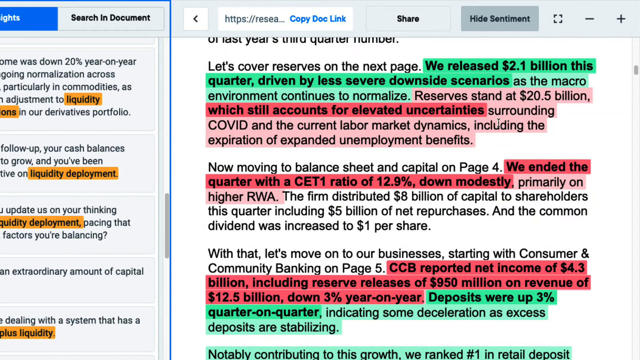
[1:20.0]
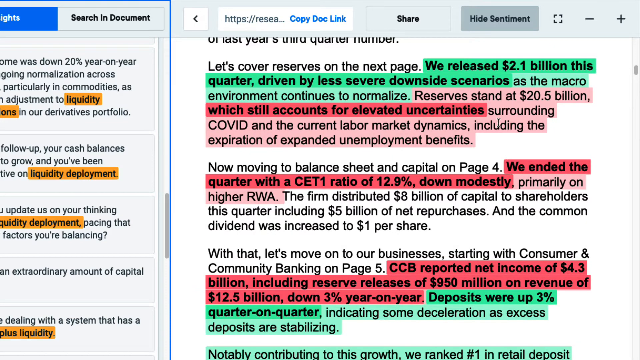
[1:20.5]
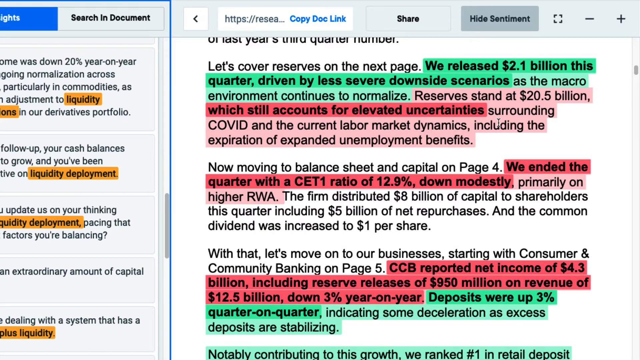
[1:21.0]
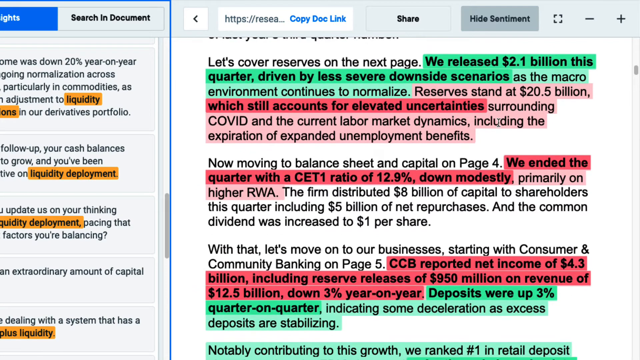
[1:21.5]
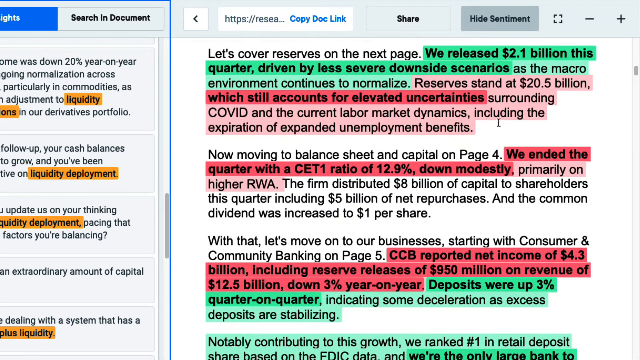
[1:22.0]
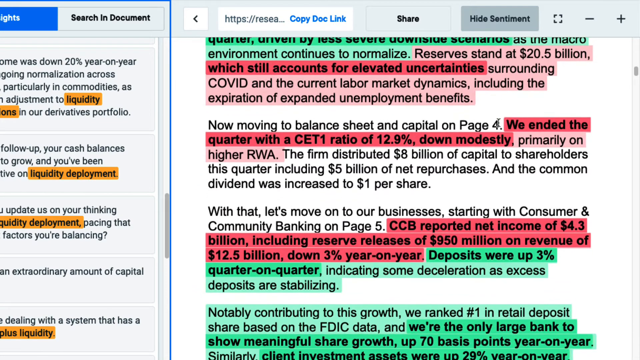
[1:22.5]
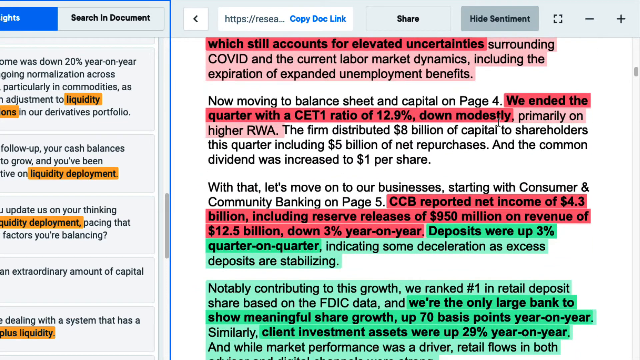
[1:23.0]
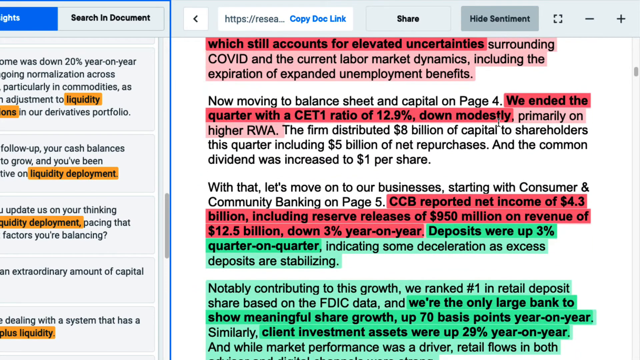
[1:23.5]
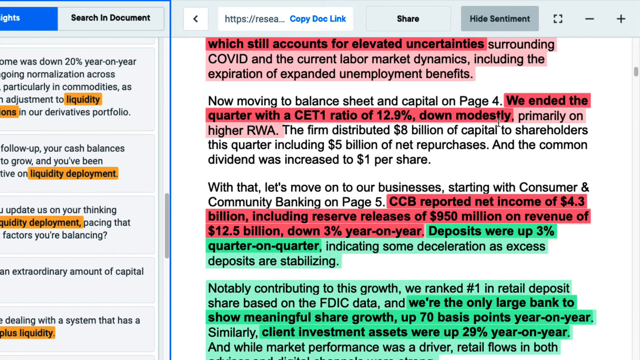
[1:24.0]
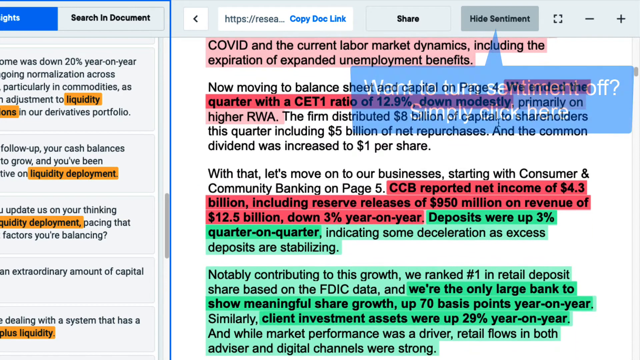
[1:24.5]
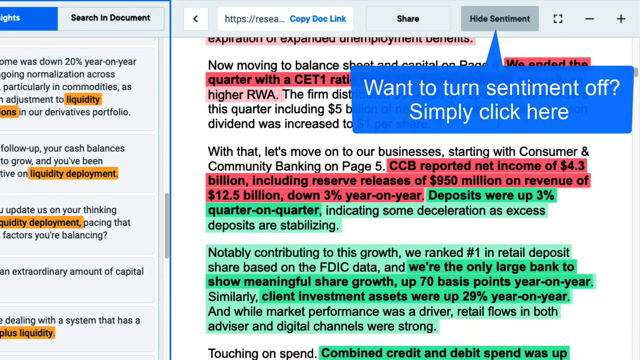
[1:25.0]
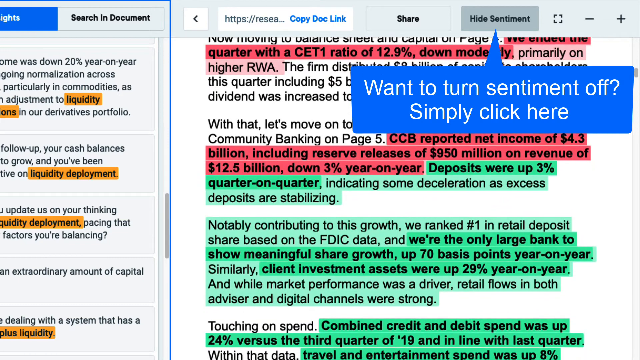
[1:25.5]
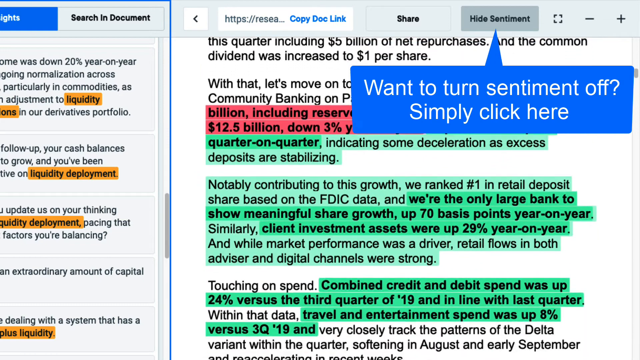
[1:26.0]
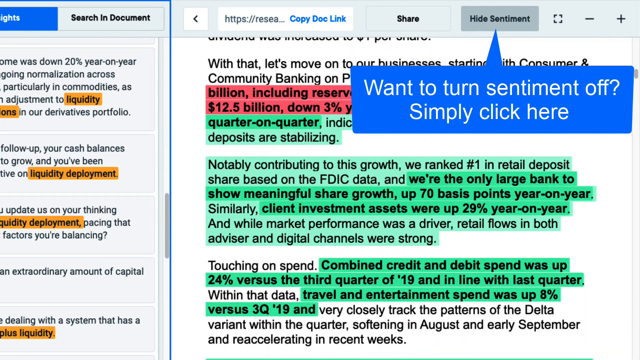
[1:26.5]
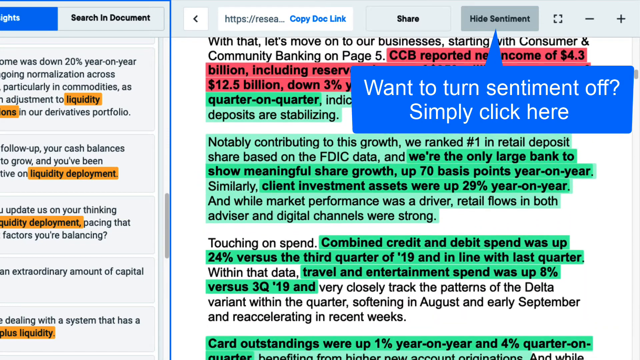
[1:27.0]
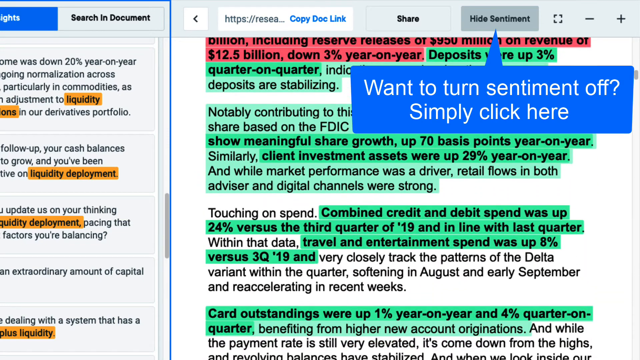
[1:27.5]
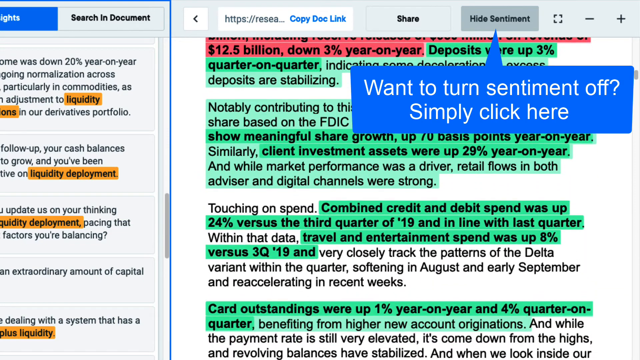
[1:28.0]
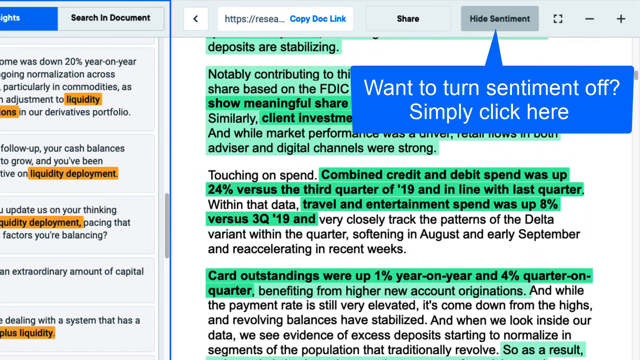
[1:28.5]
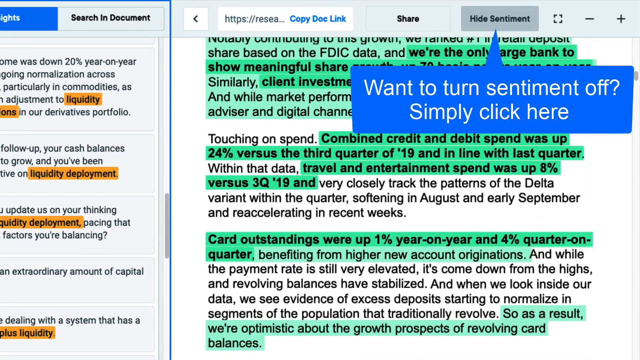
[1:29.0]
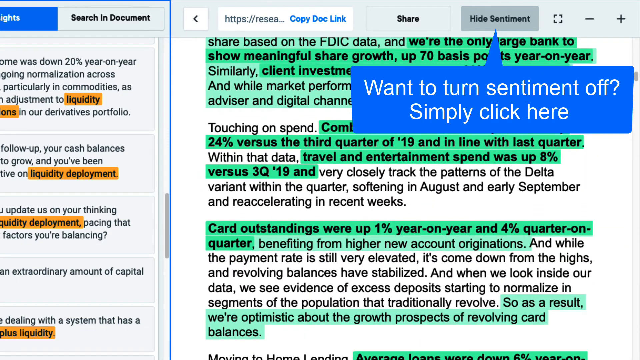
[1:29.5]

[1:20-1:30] The red-highlighted text reads "we ended the quarter with CETI ratio of 12.9% down modestly," and below it another red section reads "CCB reported net income of $4.3 billion, including reserve releases of $950 million on revenue of $12.5 billion, down 3% on year." In green, just to the right of and below that, it says "deposits were up 3%, quarter on quarter, indicating some deceleration as deposits are stabilizing," followed by "Notably contributed in this growth, we rank number one in retail deposit share based on FDIC data and we're the only large bank to show meaningful share growth at 70 basis points year on year" and "Client investments were up 29%." The page is scrolled down further, showing more information.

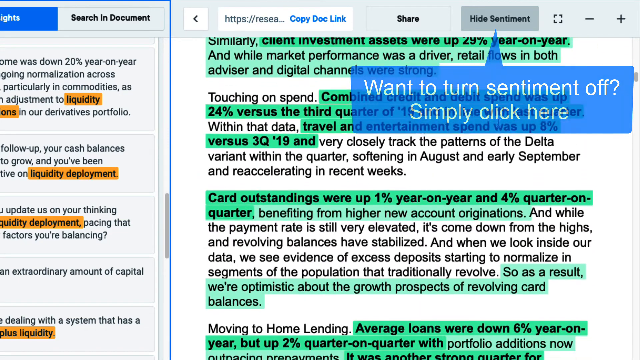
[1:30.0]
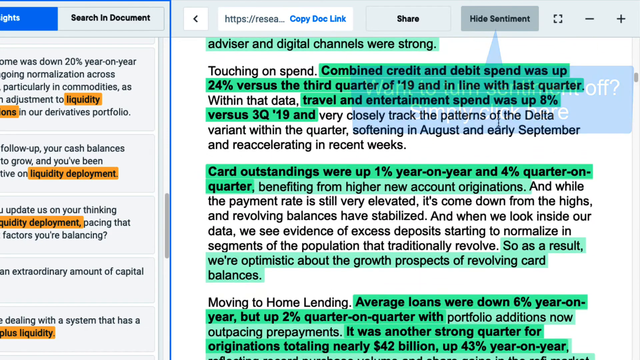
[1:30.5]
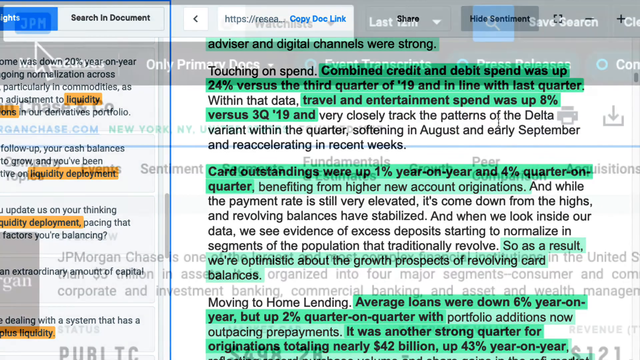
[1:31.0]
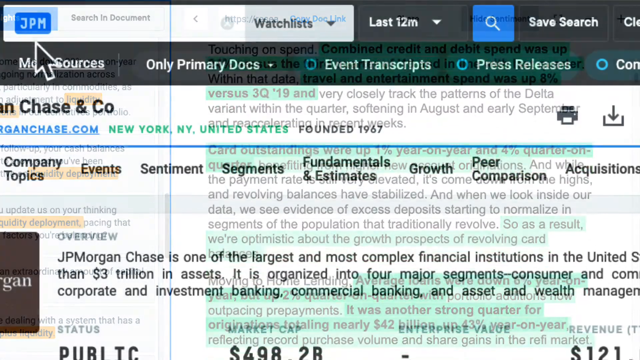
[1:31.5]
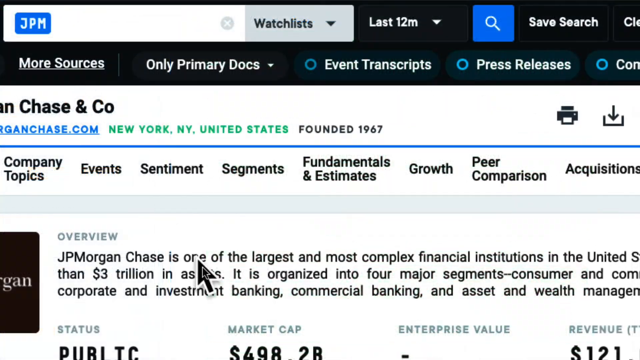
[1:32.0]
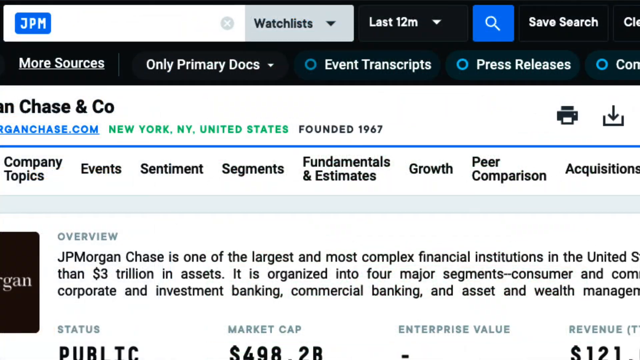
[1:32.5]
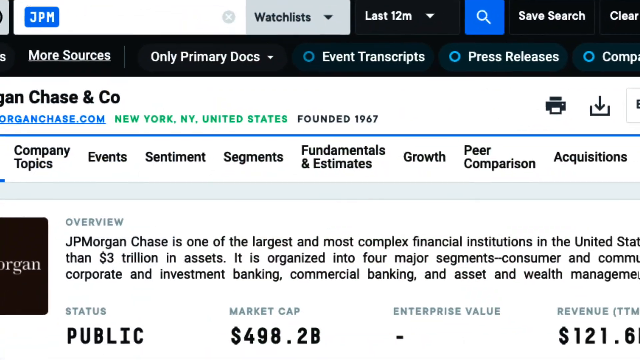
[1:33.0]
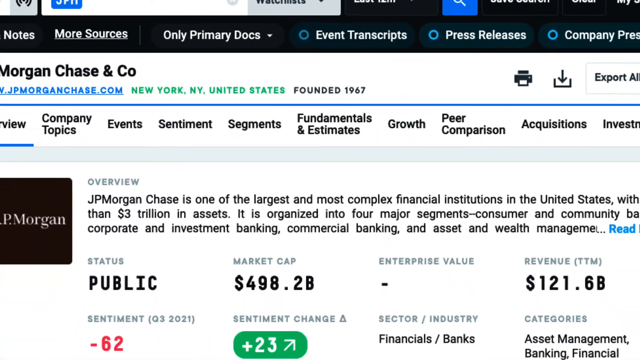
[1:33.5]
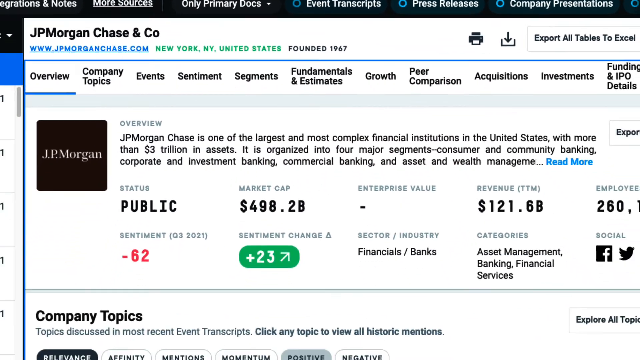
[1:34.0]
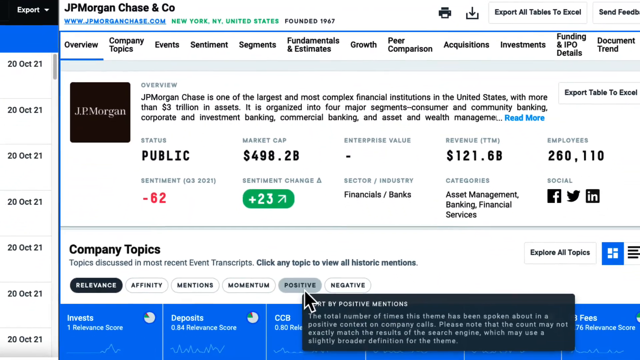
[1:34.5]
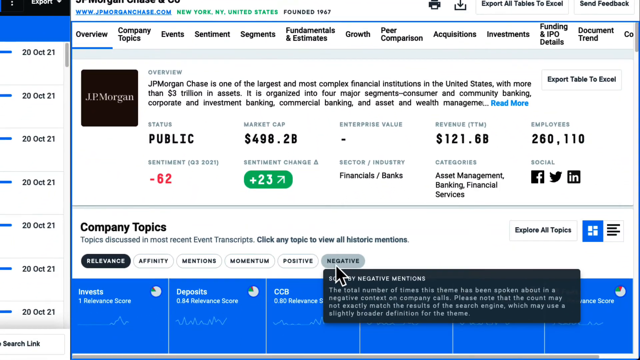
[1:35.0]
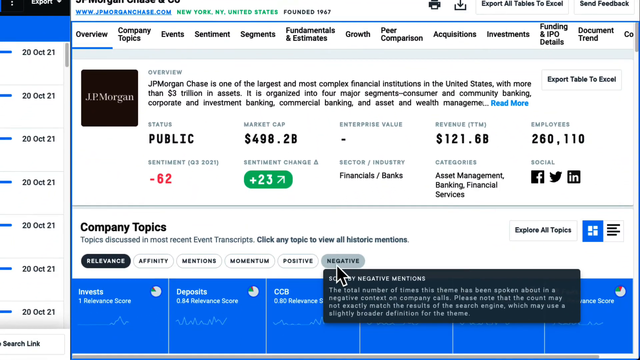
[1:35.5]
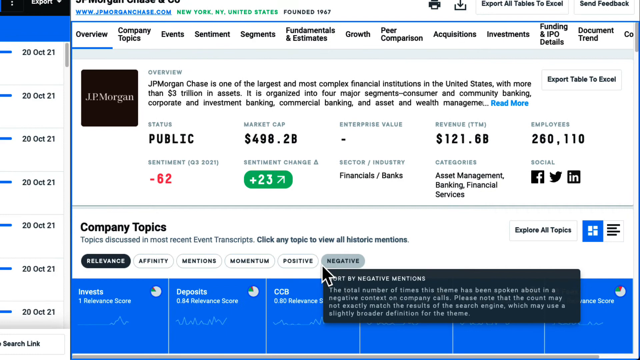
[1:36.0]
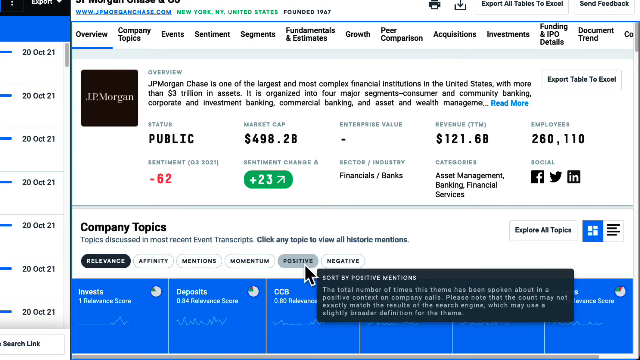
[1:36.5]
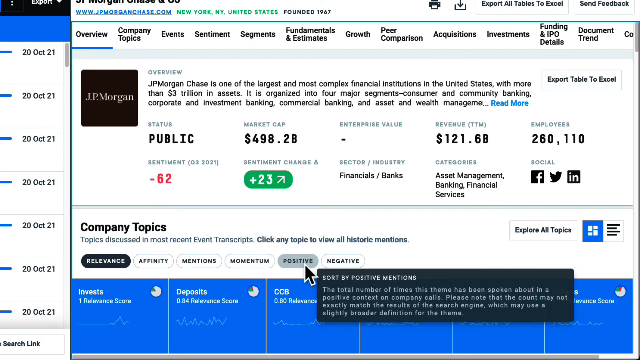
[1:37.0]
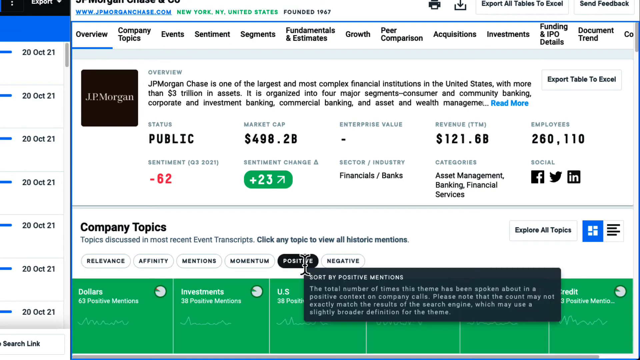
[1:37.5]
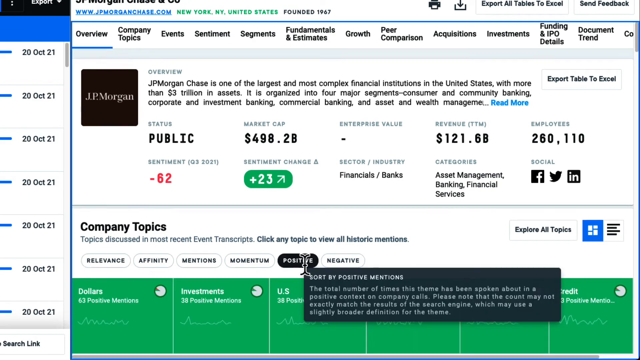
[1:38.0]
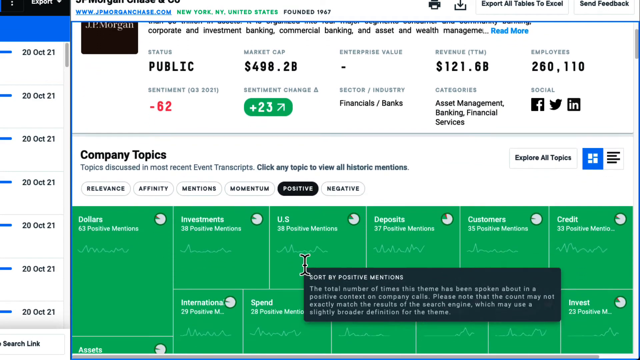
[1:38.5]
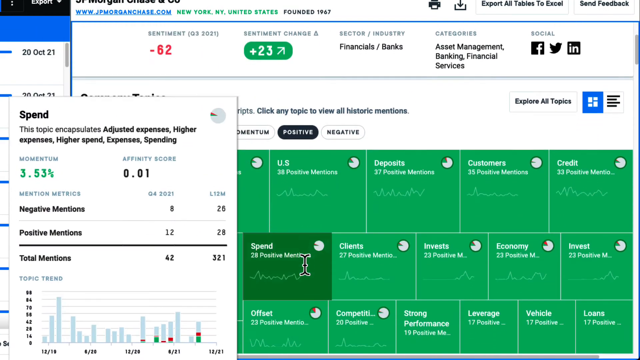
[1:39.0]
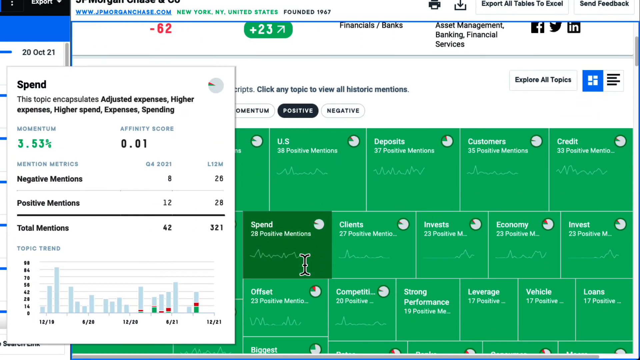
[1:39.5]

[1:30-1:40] The cursor moves downward to a further readout with an overview at the top: "J.P. Morgan Chase is one of the largest and most complex financial institutions in the United States with more than $3 trillion in assets. It's organized into four major segments, consumer and community banking, corporate and investment banking, commercial banking and asset and wealth management." It lists status public, sentiment negative 62, market cap 498.2 billion, sentiment plus 2.3, revenue 121.6 billion, and 260,110 employees. Below that, a positive option is clicked, and green items show up.